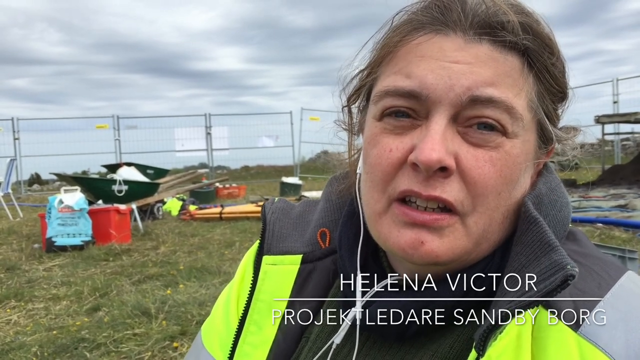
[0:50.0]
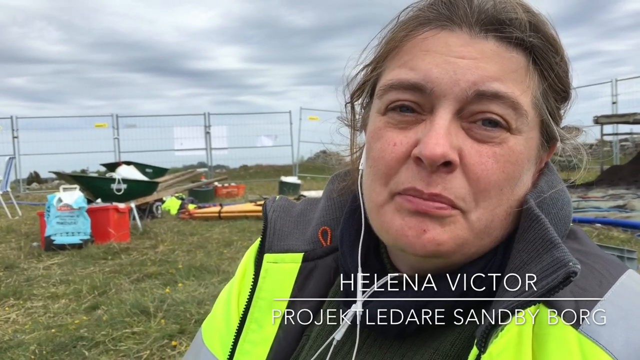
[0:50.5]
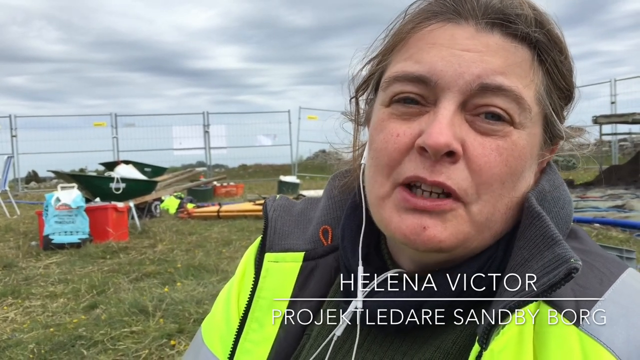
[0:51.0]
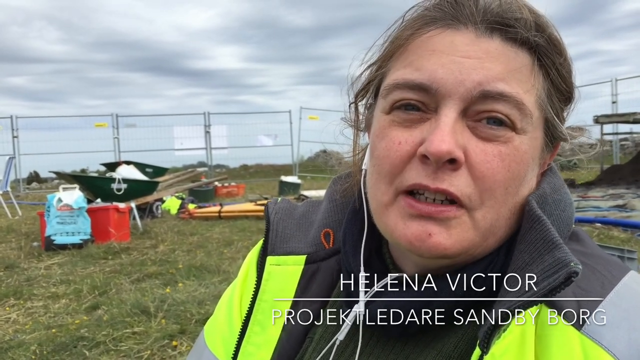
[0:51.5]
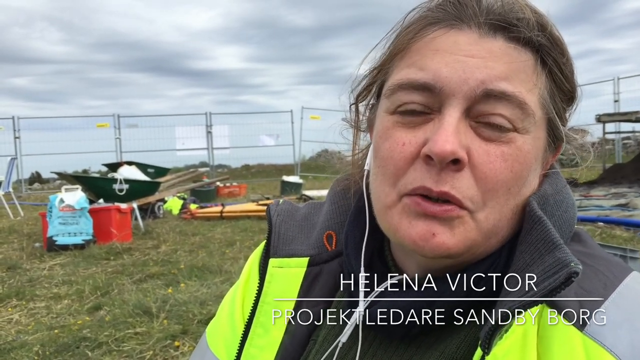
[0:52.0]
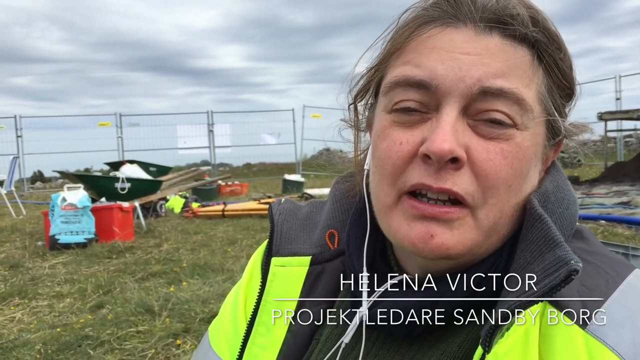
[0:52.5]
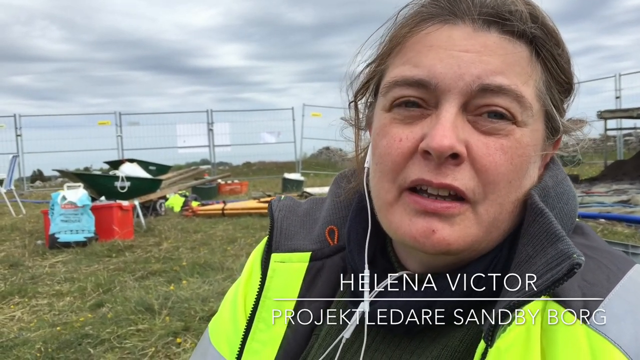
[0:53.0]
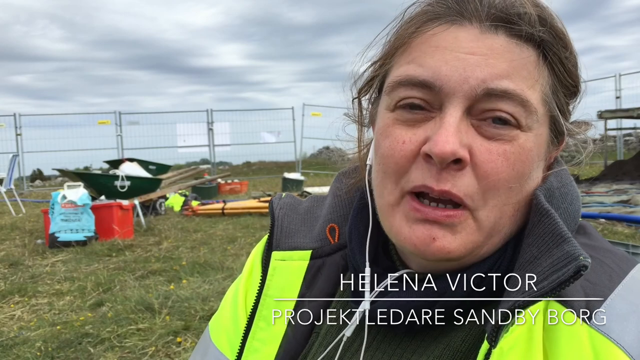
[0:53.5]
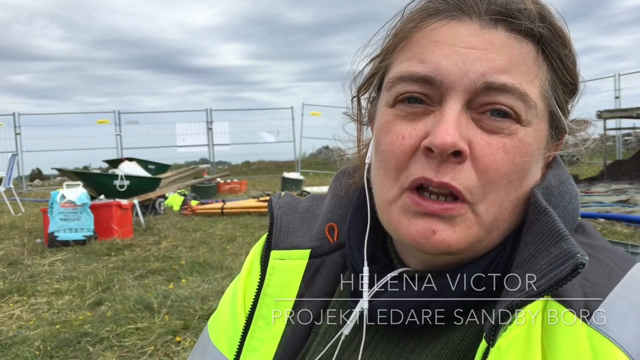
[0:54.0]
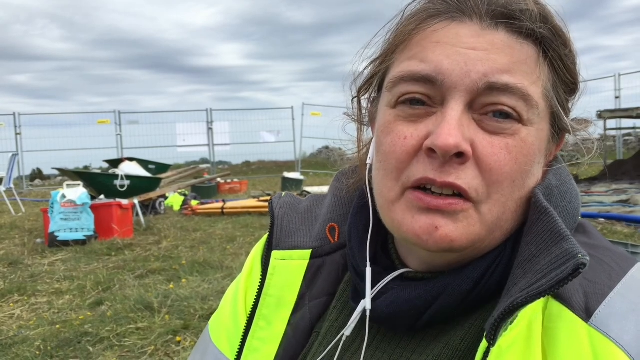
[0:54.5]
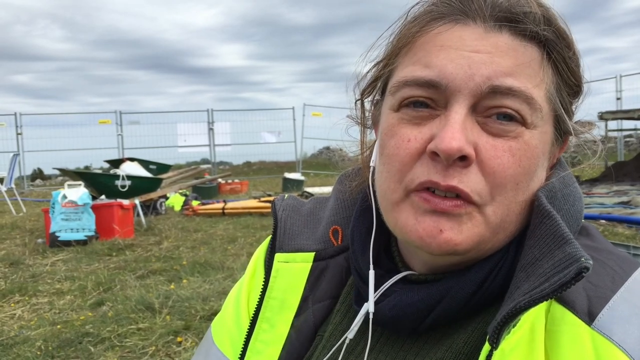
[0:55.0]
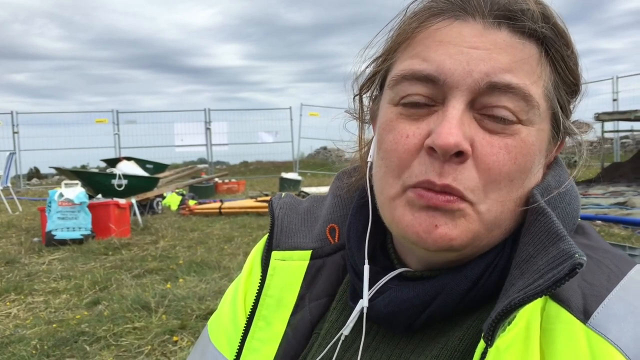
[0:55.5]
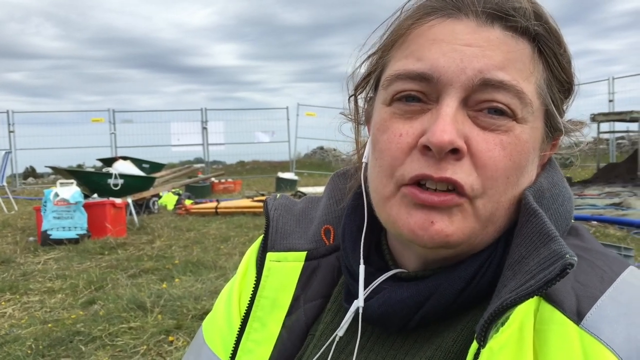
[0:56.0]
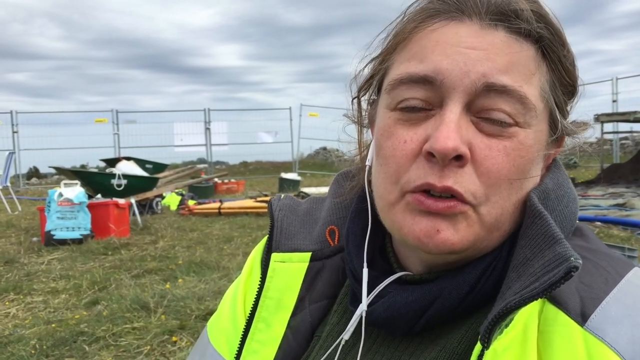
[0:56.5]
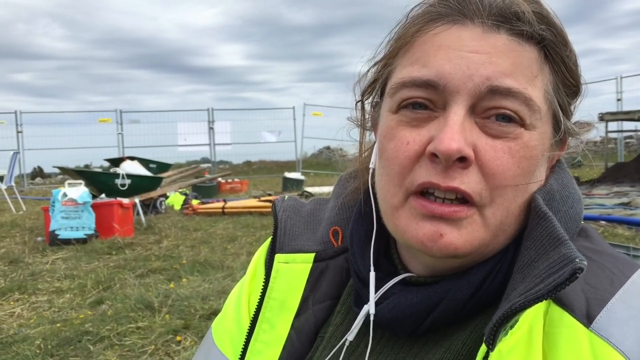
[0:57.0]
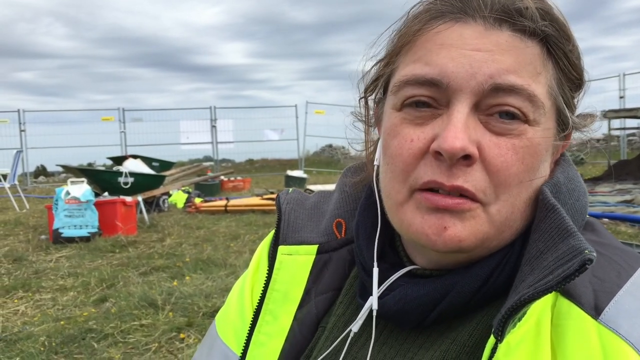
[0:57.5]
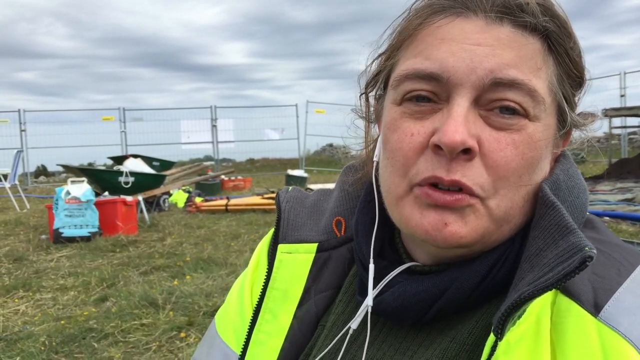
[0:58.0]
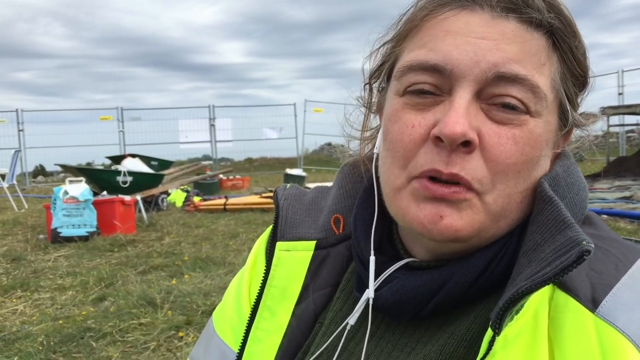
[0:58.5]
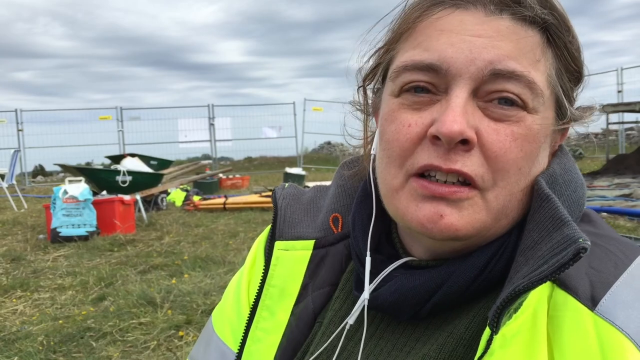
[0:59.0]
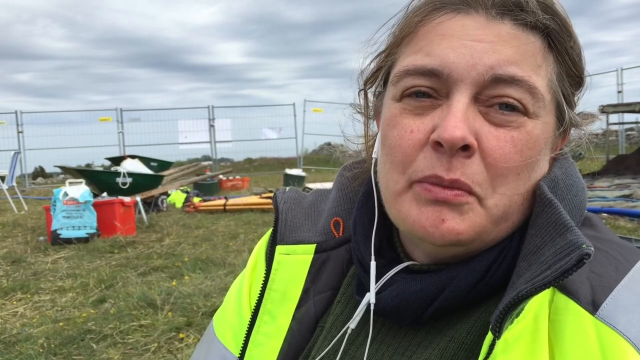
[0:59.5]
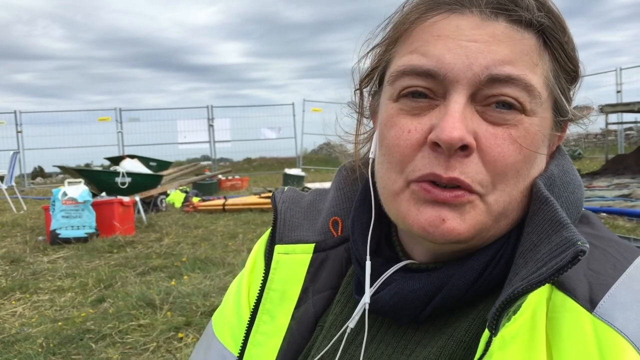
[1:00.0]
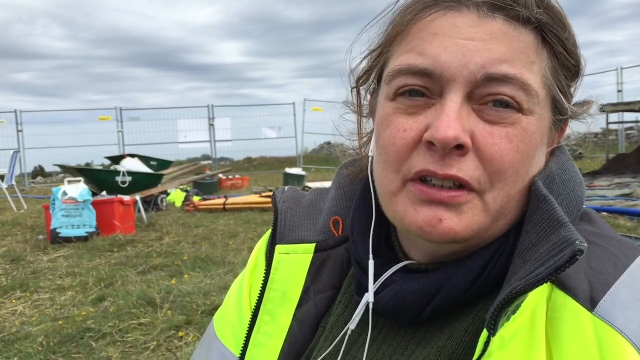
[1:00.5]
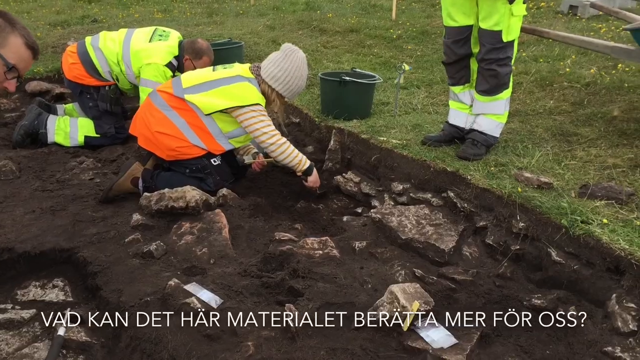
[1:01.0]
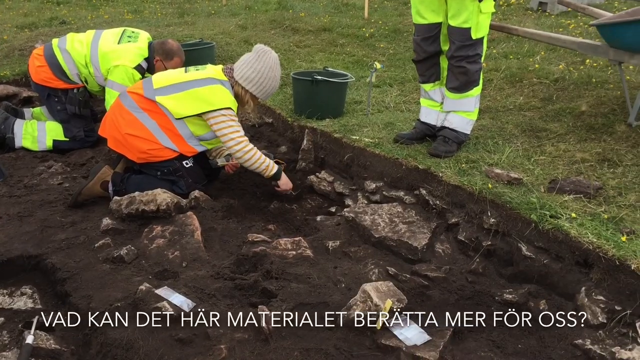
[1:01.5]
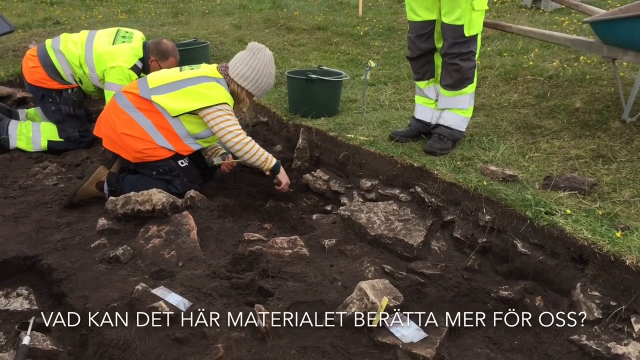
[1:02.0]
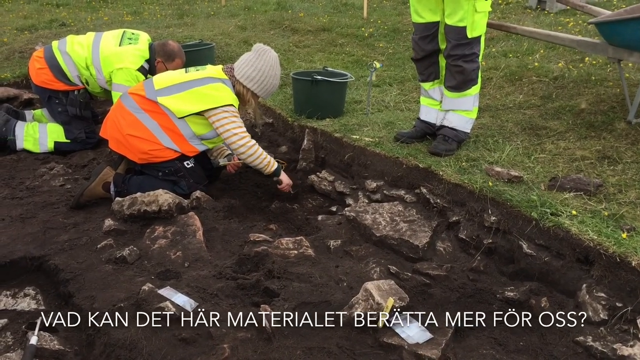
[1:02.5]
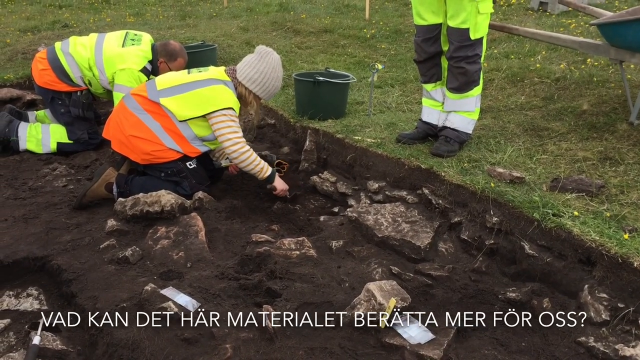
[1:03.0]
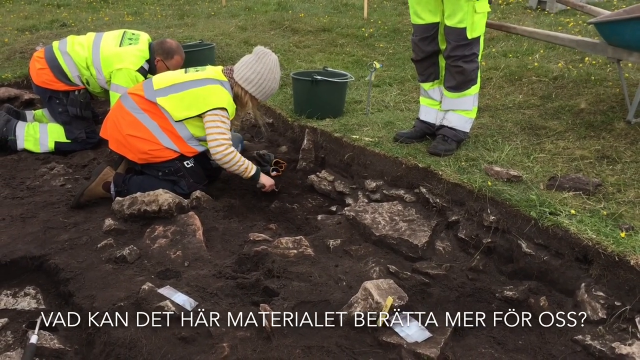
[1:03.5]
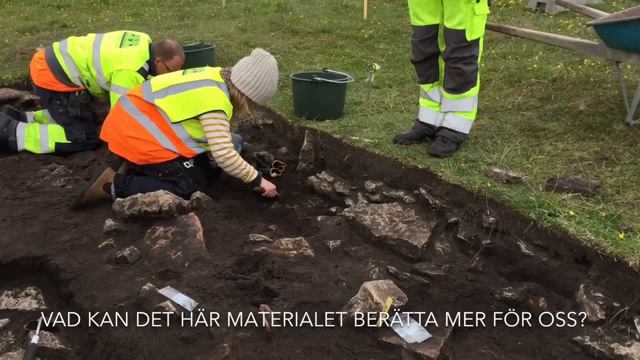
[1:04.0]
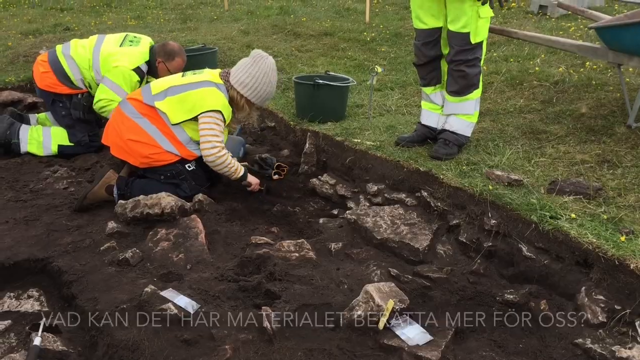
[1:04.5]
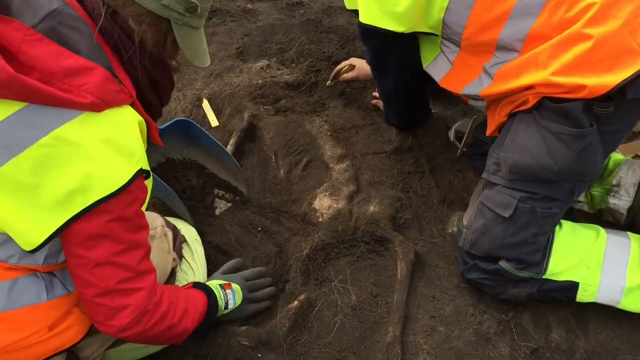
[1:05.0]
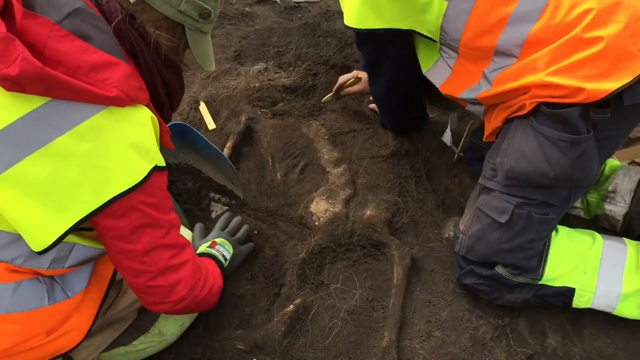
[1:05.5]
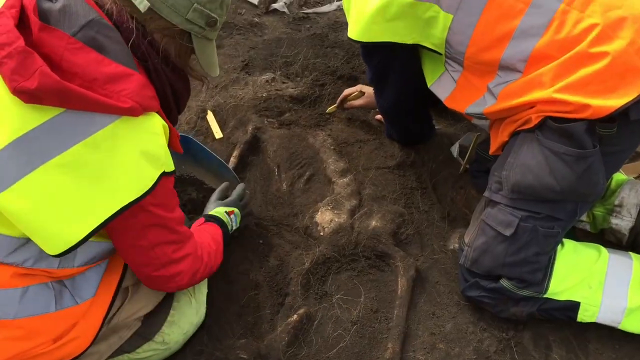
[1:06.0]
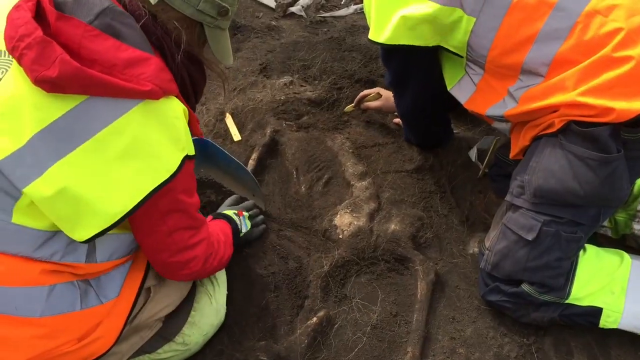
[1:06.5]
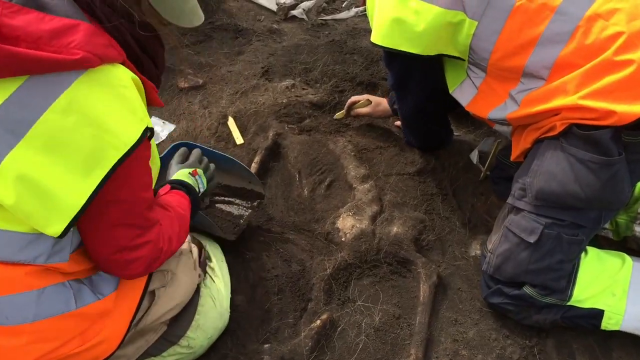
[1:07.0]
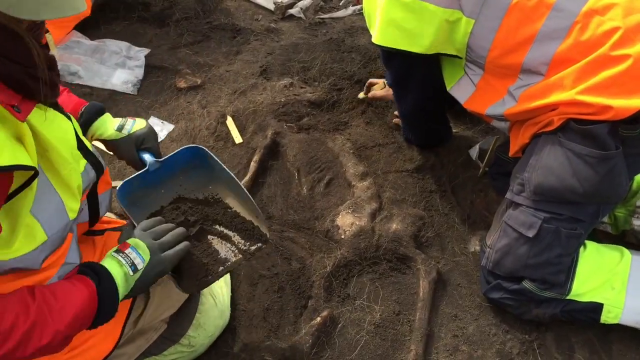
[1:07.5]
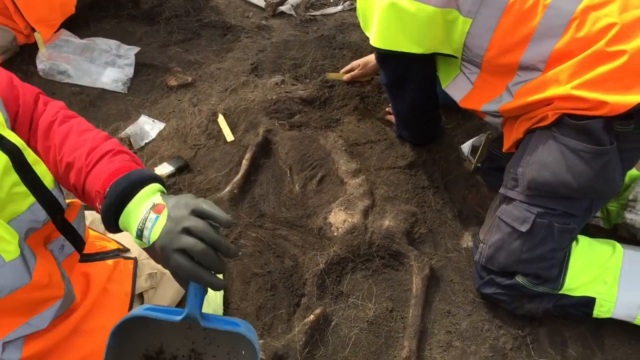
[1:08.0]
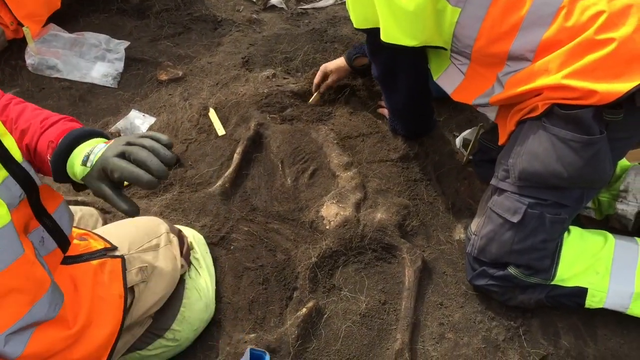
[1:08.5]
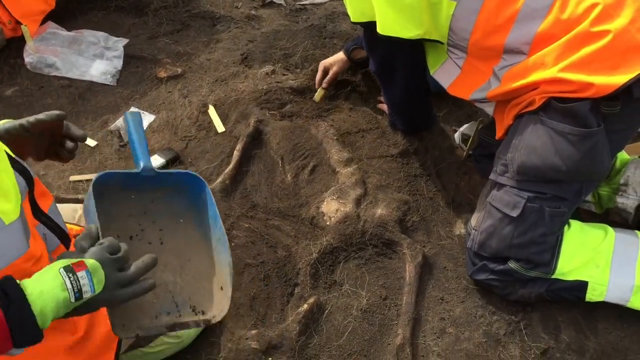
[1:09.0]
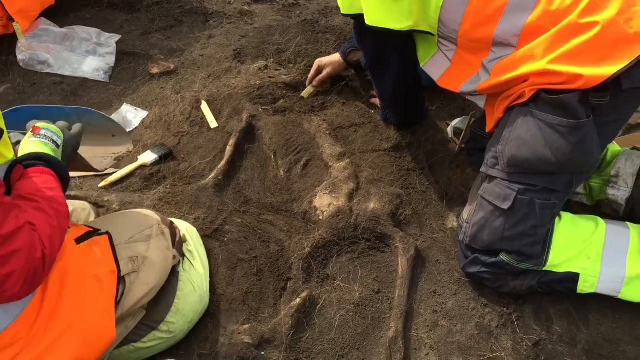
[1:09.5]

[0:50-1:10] A woman named Helena talks directly to the camera with an earphone in her ear. Then two people dig in the ground, with subtitles in a different language. They remove dirt from the area using a blue shovel and wear yellow and orange high-vis jackets. In the ground there is what looks like bones, possibly a skeleton buried there that they are trying to excavate. Around five to six people are visible in total; some wear hats and some have glasses, and all wear high-vis jackets. Multiple buckets on the ground are used to take the mud out. Wheelbarrows, fences and chairs are in the background, and the sky is still quite cloudy and dark. Someone uses a small yellow-looking stick to carefully excavate dirt from around the skeleton. Multiple rocks are in the ground around the people, and the legs of someone observing the two diggers are visible.